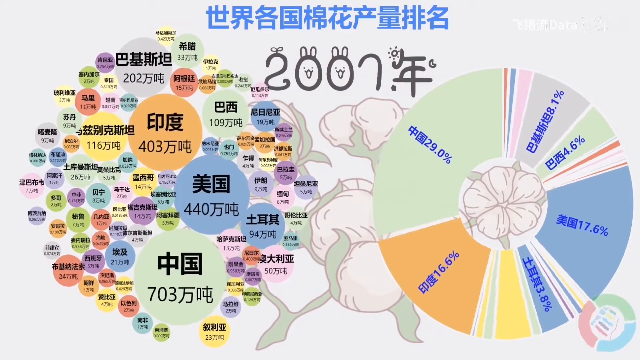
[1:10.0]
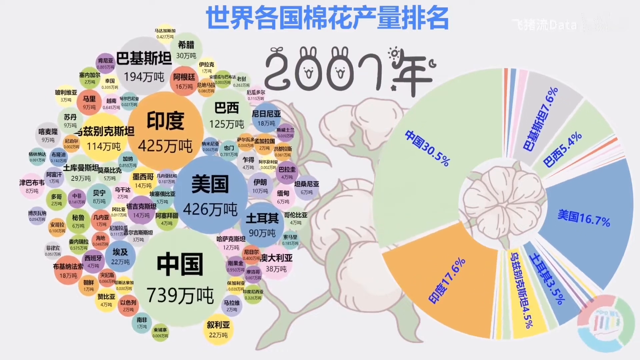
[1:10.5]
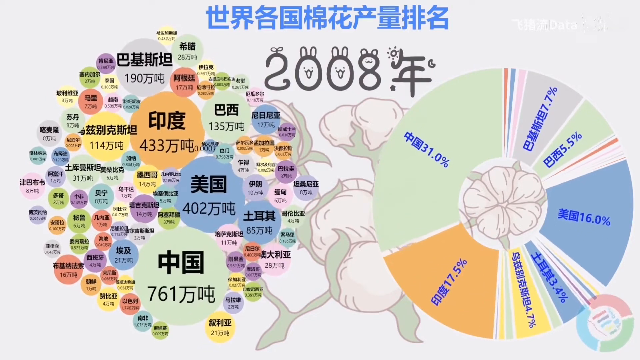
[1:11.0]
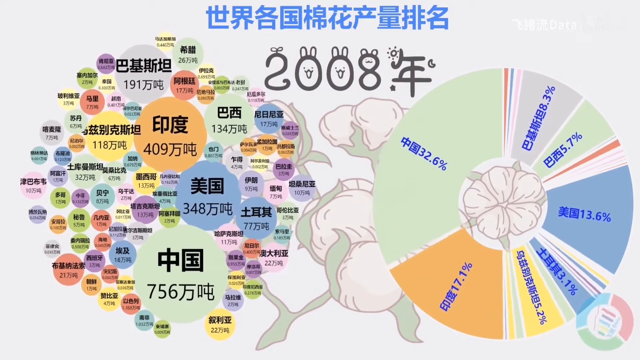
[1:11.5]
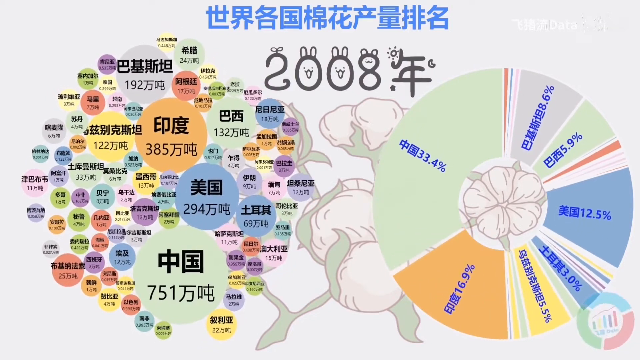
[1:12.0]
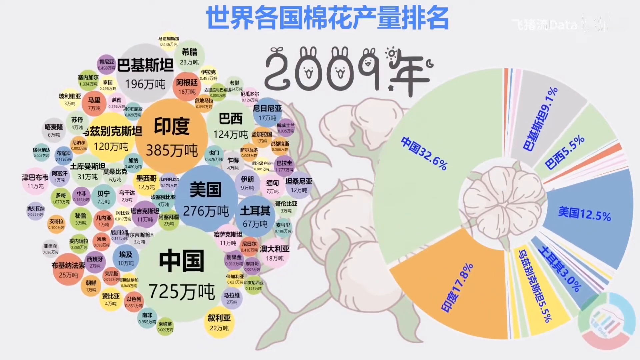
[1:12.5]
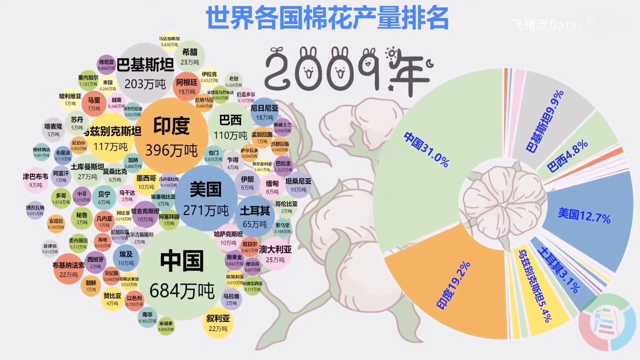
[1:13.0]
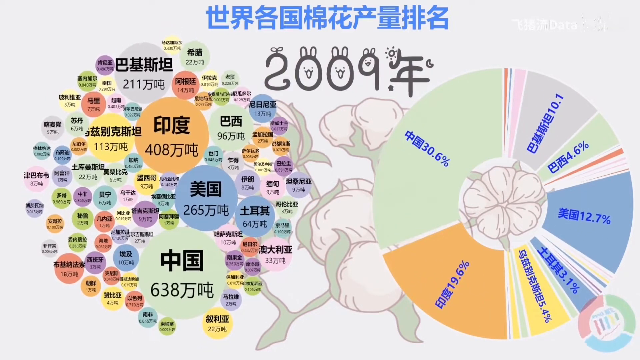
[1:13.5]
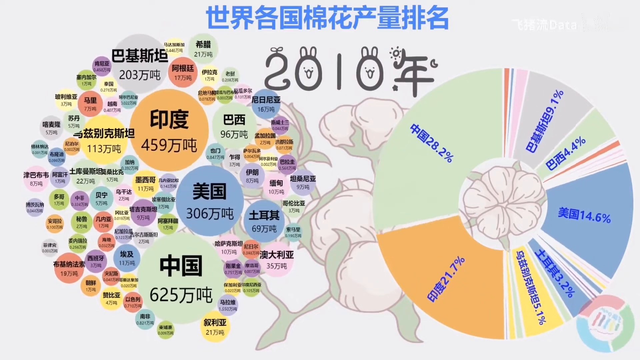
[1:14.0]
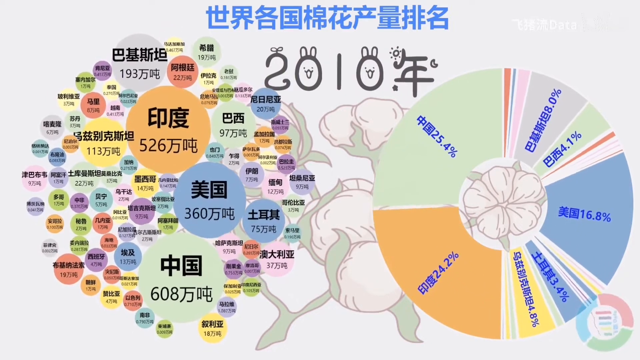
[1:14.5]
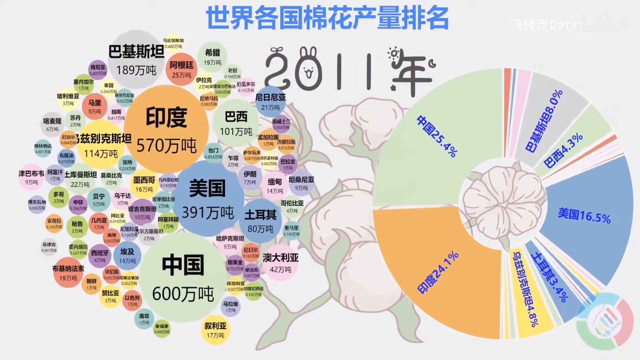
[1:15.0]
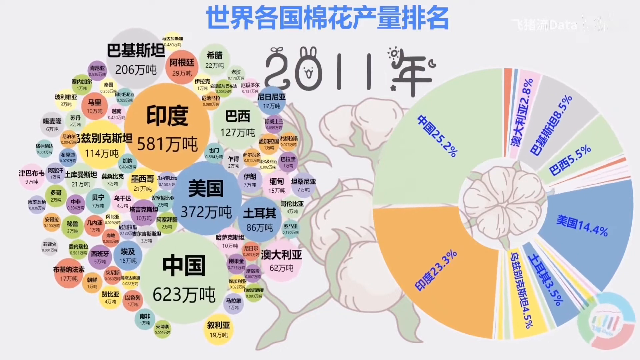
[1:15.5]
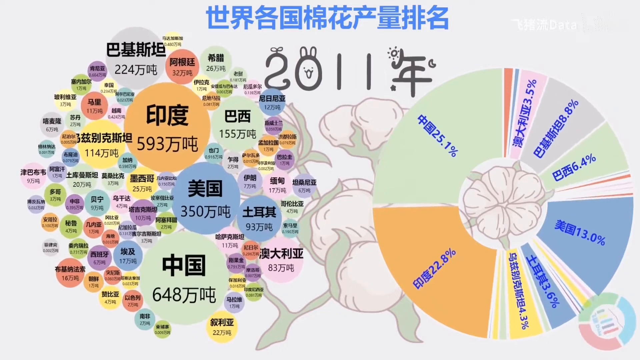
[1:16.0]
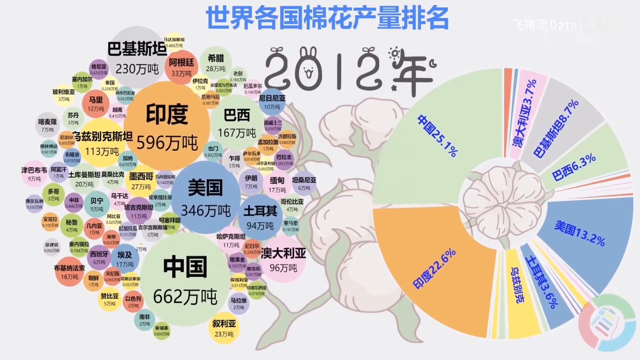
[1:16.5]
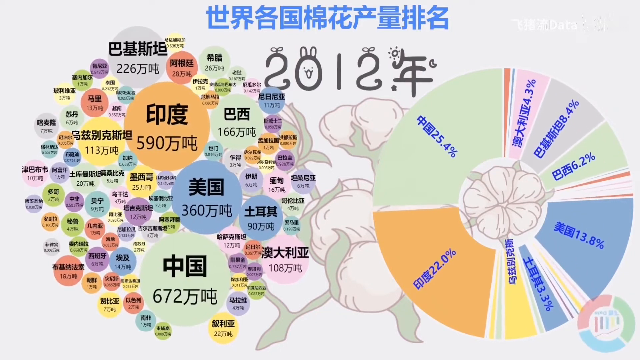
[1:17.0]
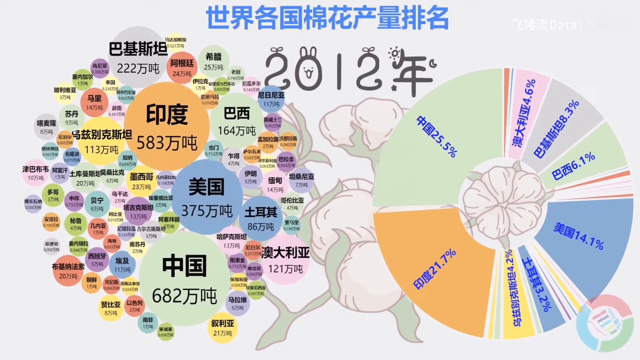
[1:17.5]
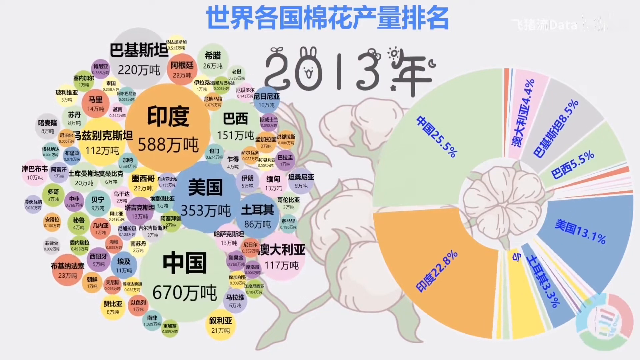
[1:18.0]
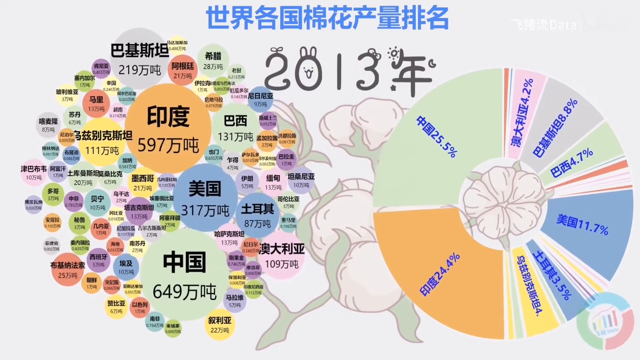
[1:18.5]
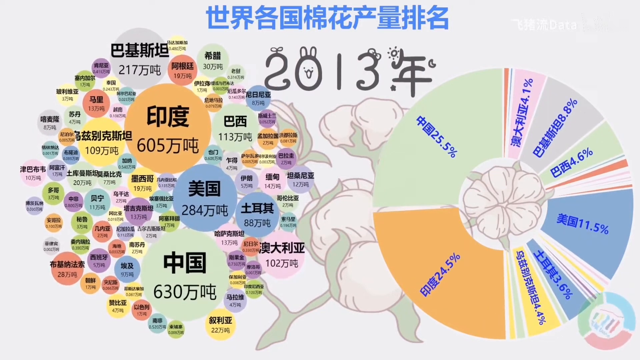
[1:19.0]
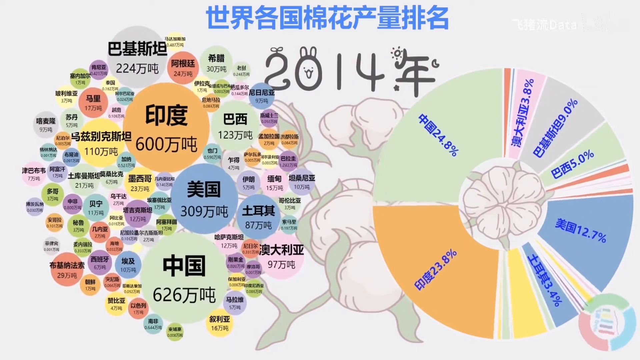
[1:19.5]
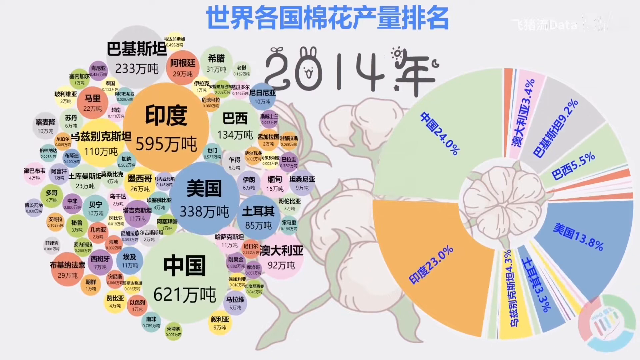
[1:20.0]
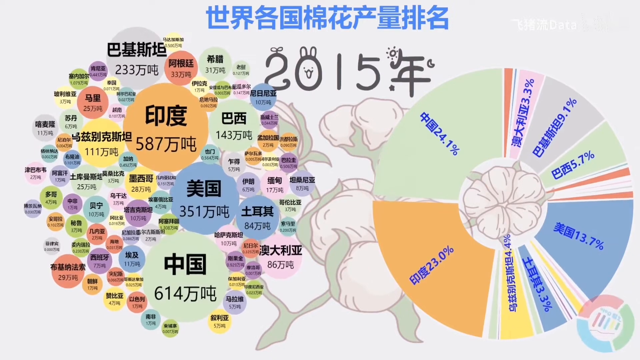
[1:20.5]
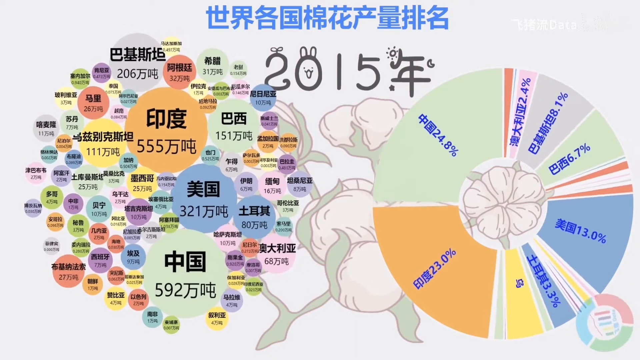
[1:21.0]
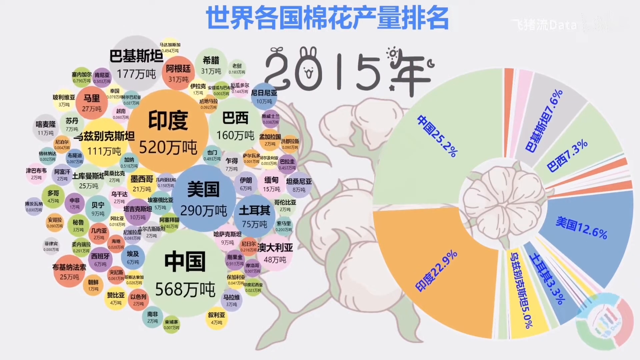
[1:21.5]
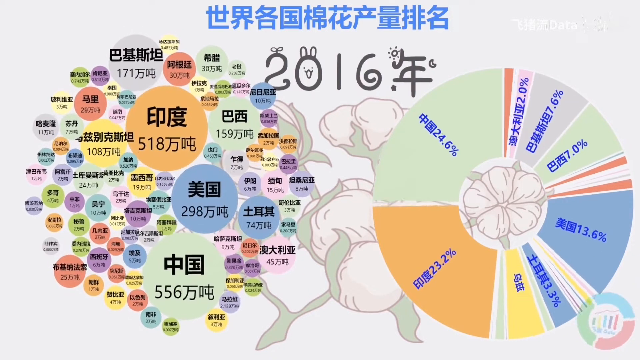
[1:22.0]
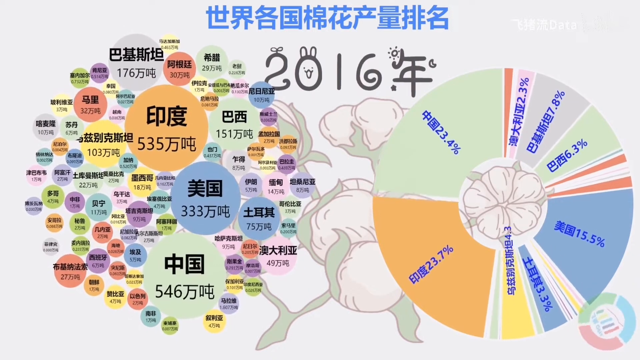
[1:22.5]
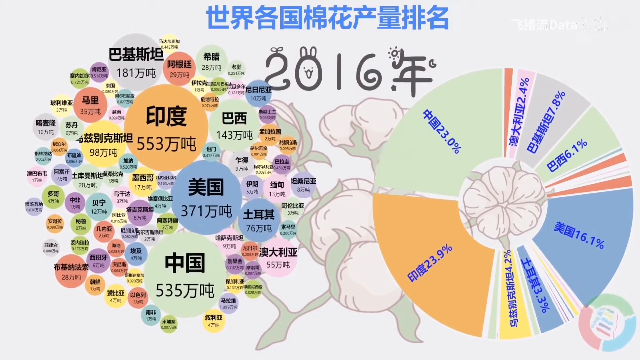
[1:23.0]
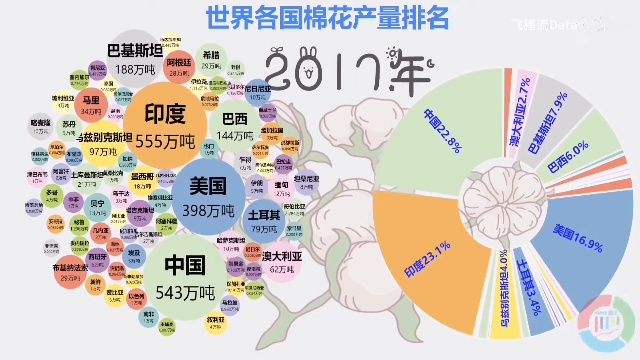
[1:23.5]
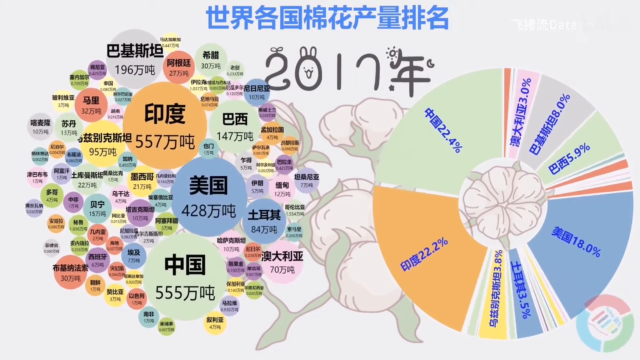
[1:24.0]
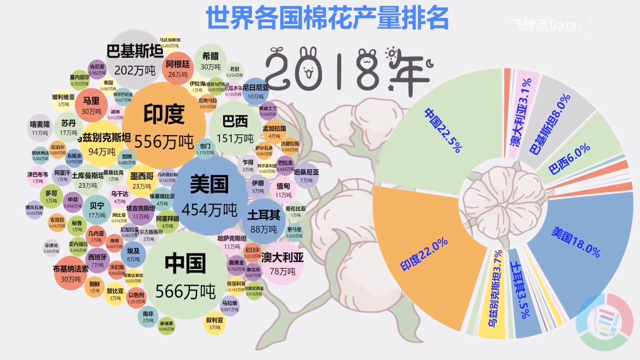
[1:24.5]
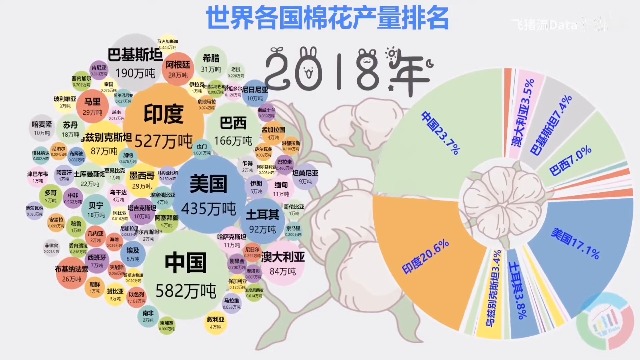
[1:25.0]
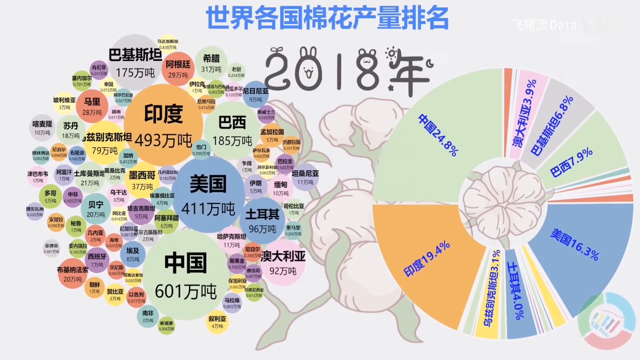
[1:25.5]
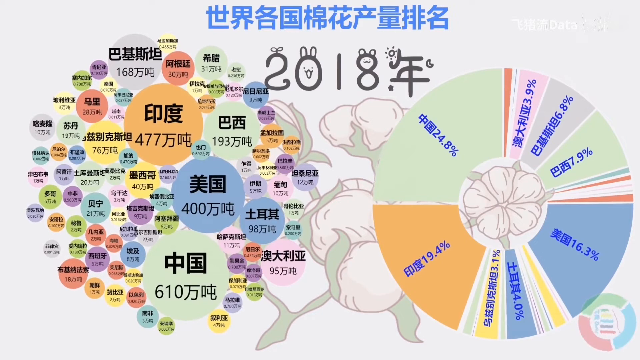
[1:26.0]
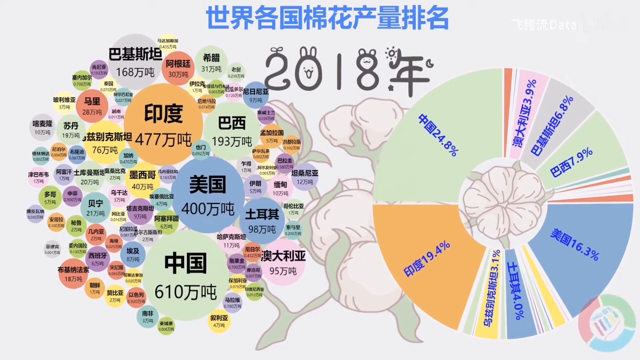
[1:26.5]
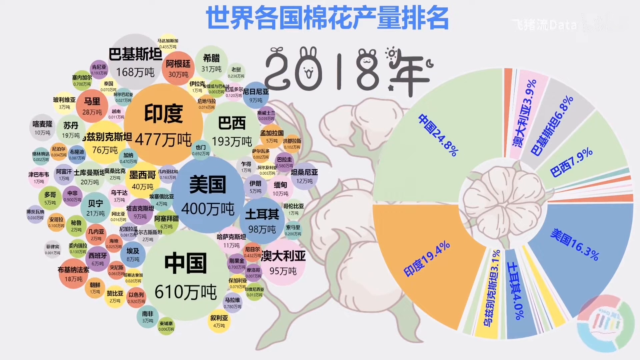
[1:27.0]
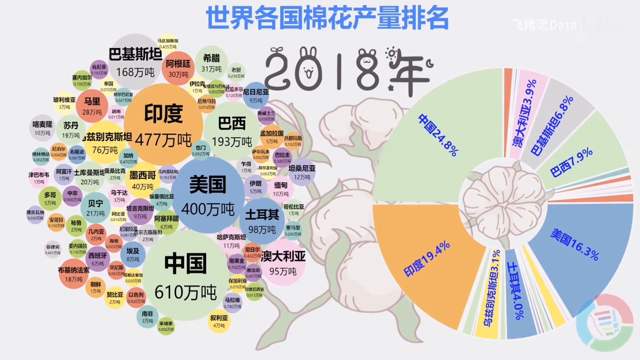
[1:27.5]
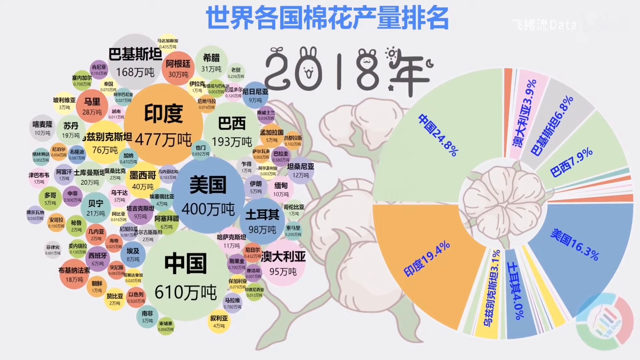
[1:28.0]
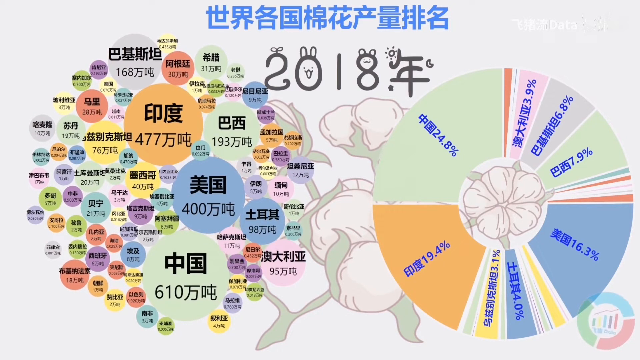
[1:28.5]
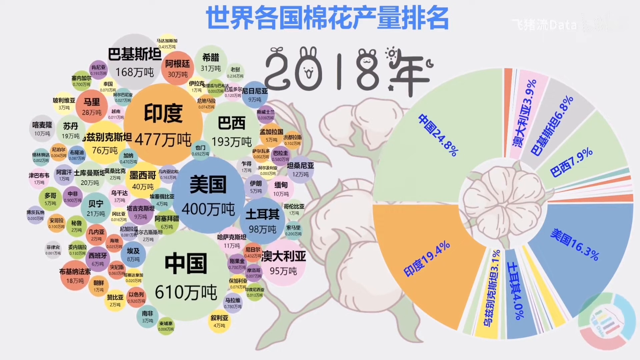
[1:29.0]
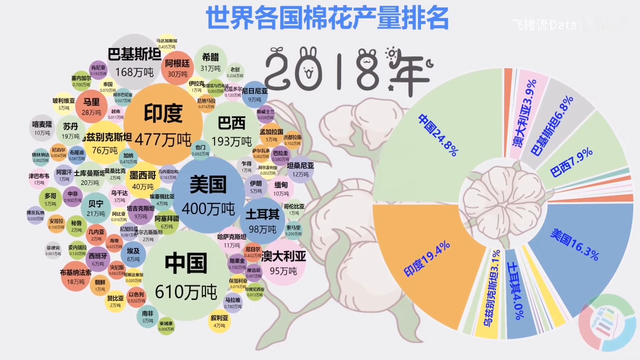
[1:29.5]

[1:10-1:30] Two circle-shaped charts are side by side. The bubble chart on the left shows cotton production by weight or volume from different countries from 2010 to 2018. In the pie chart on the right, China's share stays stable at around 22-25% of world output, while the U.S. share fluctuates between 11 and 16 percent over this period. Another country, represented in orange, has almost surpassed China's output. All the country name labels are written in Chinese, and the year is written in black between the two charts. The colors for each country stay the same, with light blue for the U.S. and light green for China.